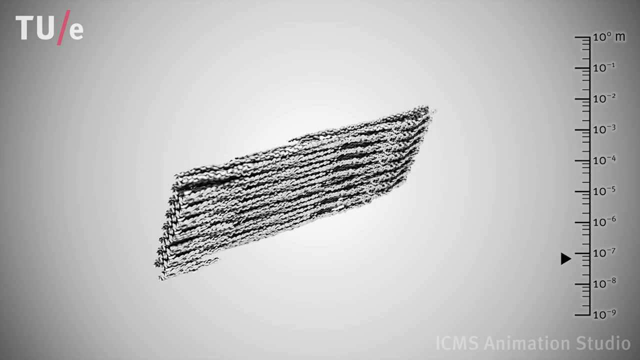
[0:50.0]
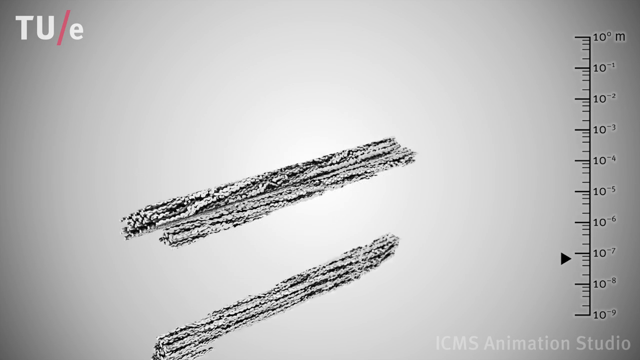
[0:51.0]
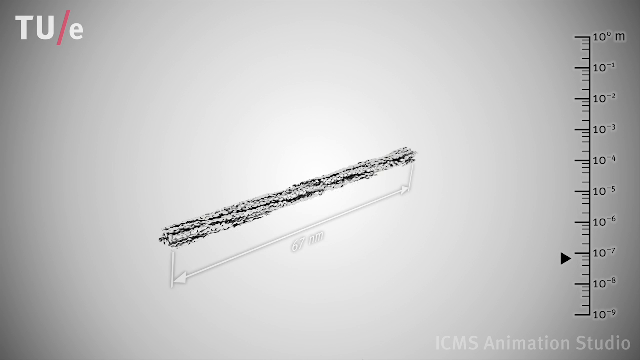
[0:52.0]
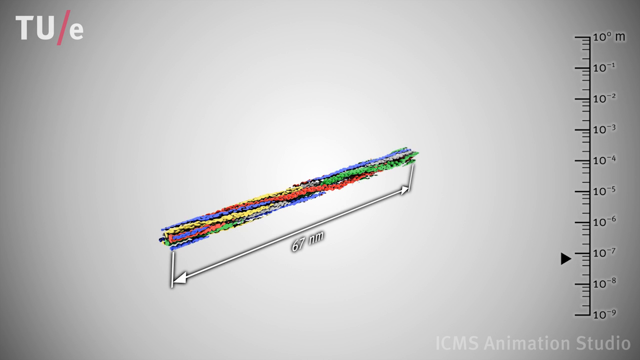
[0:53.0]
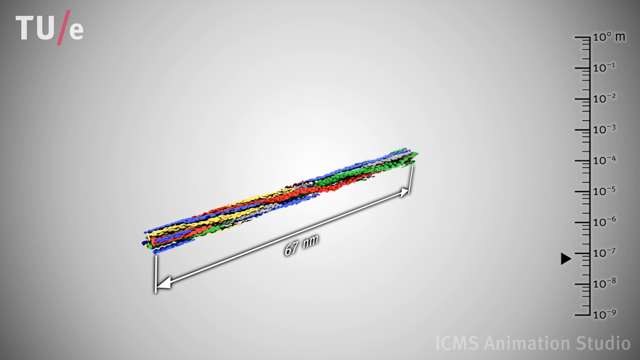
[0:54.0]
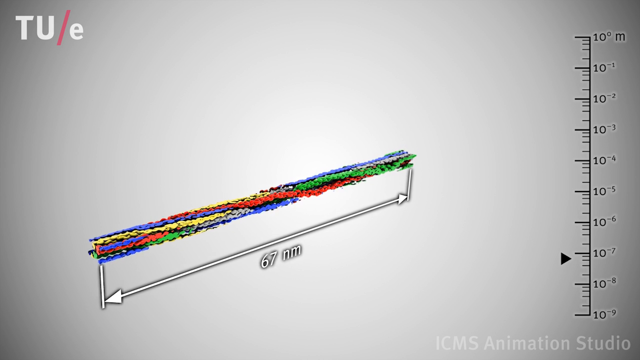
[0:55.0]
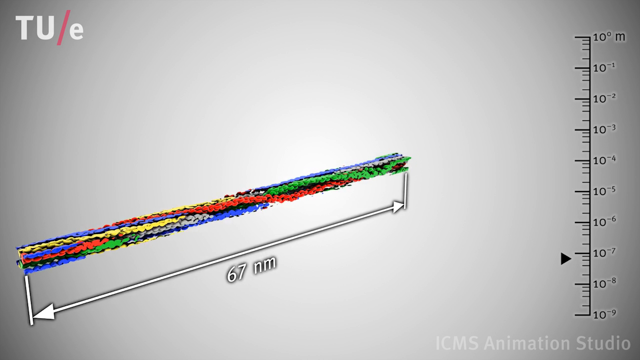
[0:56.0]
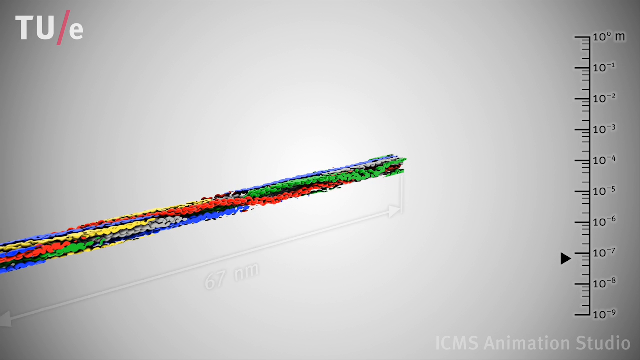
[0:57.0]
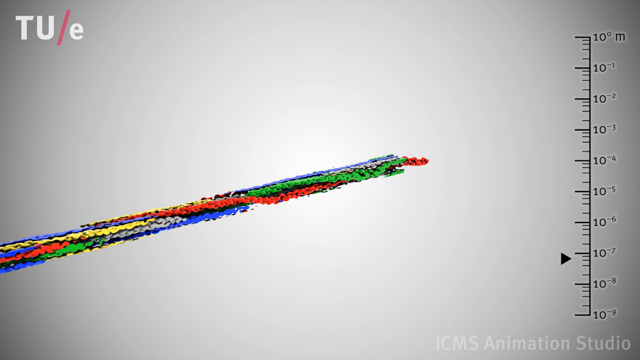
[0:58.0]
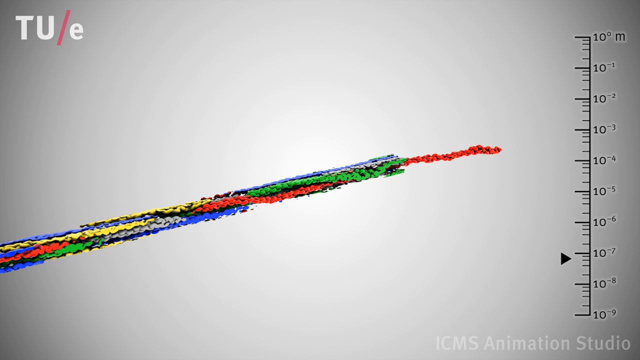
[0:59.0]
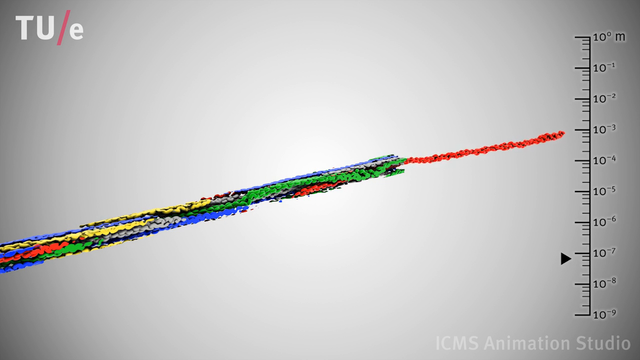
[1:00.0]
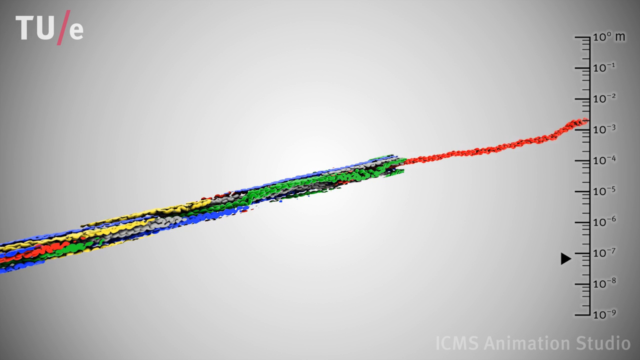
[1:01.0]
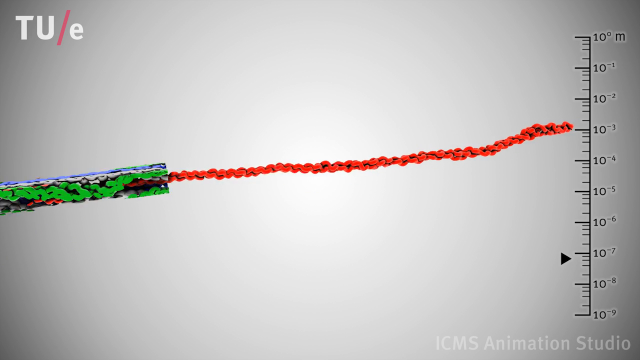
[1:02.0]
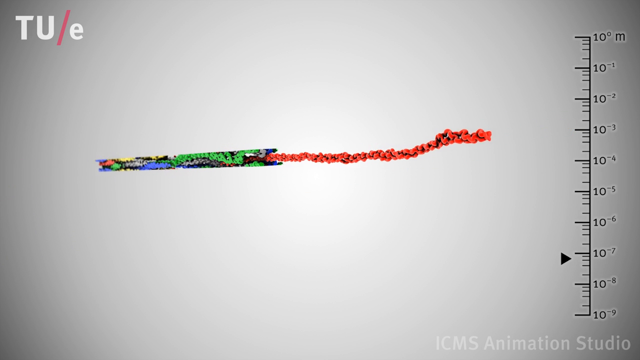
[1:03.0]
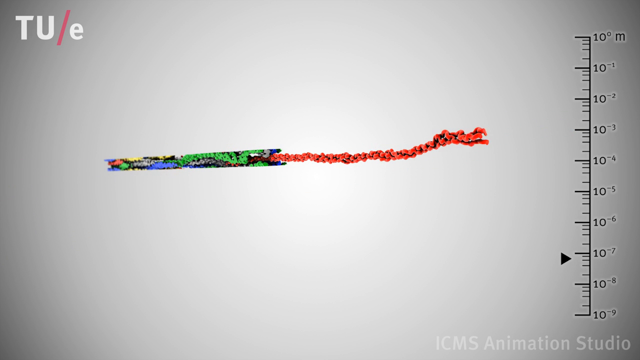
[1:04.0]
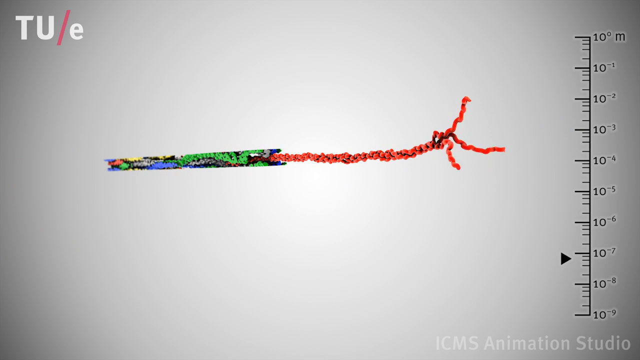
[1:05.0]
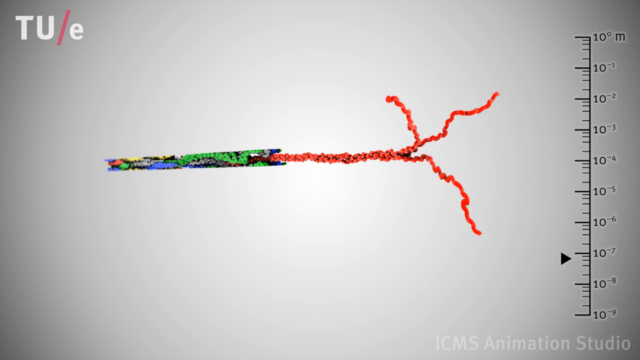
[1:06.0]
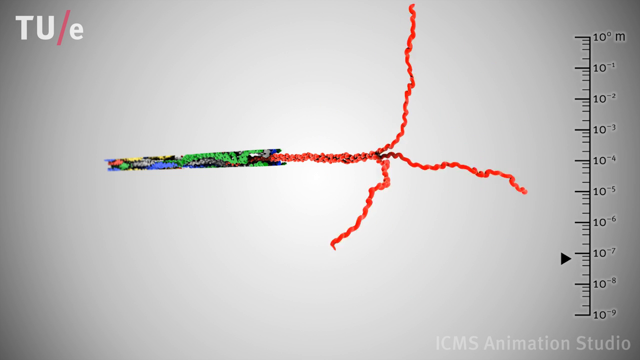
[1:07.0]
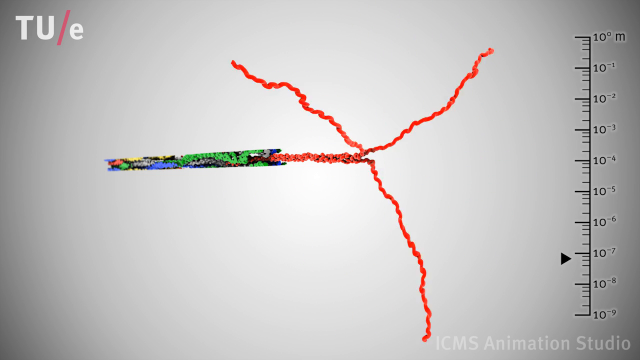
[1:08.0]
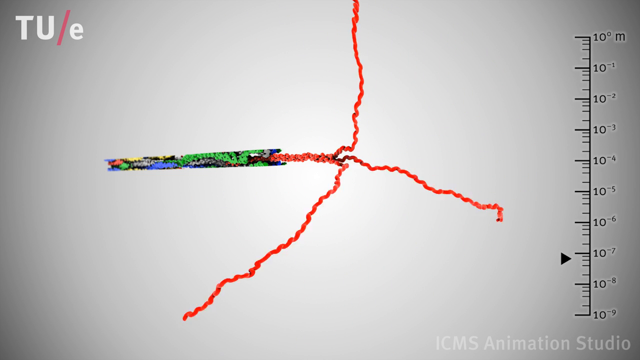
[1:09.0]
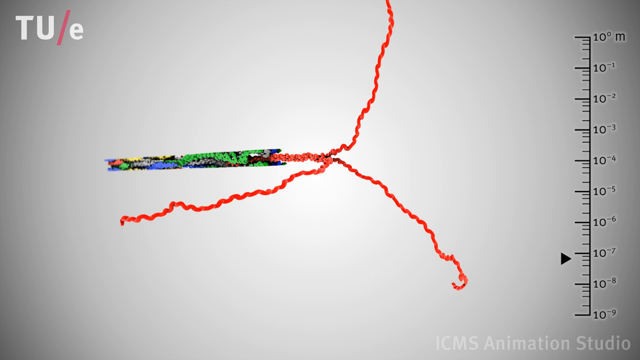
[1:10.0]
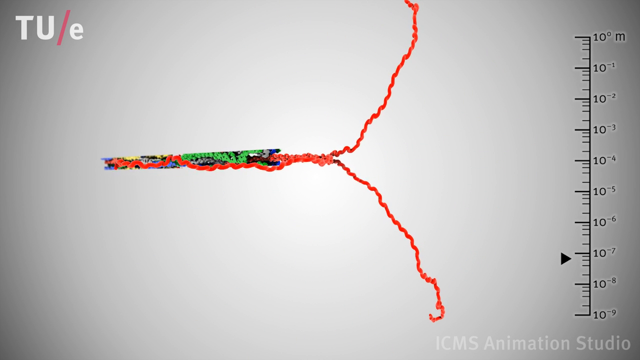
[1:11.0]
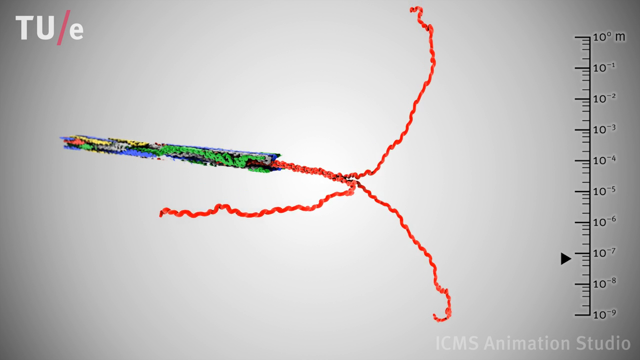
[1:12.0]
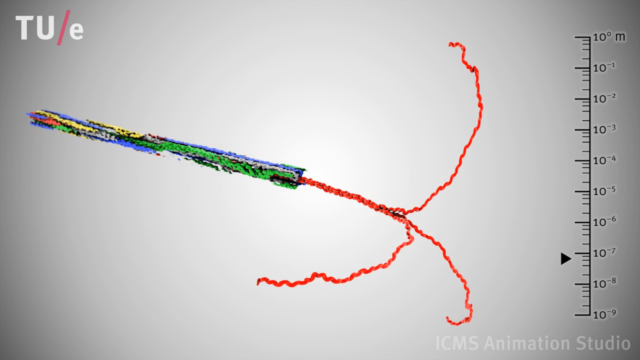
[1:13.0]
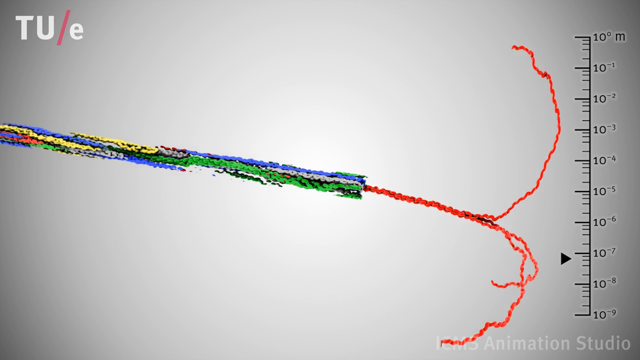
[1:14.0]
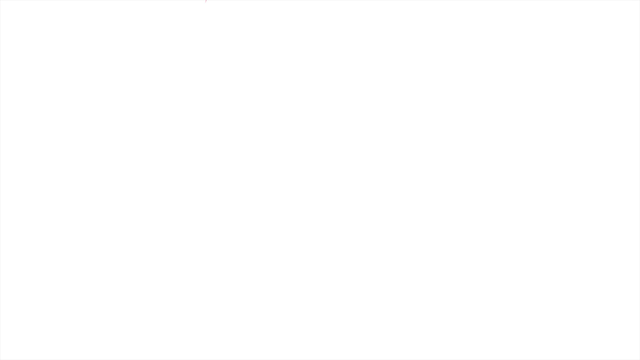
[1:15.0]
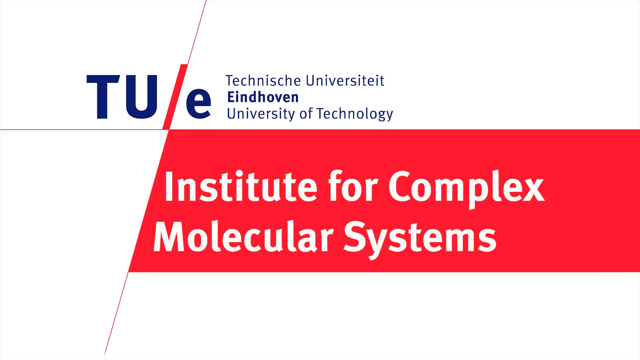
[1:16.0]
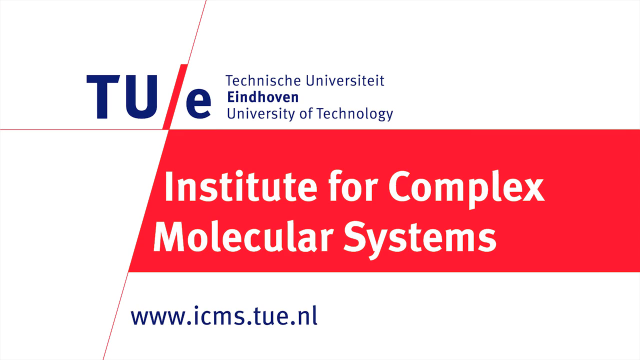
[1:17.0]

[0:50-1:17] Against a gray background, white text at the top left reads "TU/E", and on the right side is a scale from 10 to the 0 meters down to 10 to the minus 9 meters at the bottom, with a black arrow pointing at what looks like 10 to the minus 7. In the middle of the screen is a black-and-white picture of what looks like a flat surface of many strands resembling wires and tubes. It appears to be cut away until only a thin strand of what looks like wires remains, which then becomes colored, with purple, yellow, red and green wires intertwined with each other. A white line runs diagonally from the bottom left to the top right in the middle and reads "67 nanometers". The strand of hair-like wires rotates, the view zooms in, and what looks like a red strand is pulled out of it. The view zooms in on this red strand, which unravels into three red strands, unraveling clockwise while rotating and becoming longer and longer in the middle of the frame. It then rotates again to the right. An outro screen follows, with "tue" at the top left, "University of Technology" at the top, a red banner in the middle with white text reading "Institute for complex molecular systems", and at the bottom a URL in blue text reading "www.icms.tue.nl".